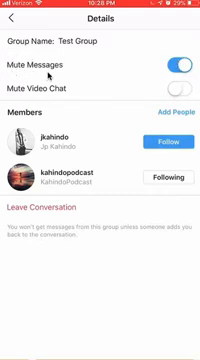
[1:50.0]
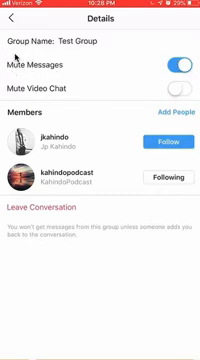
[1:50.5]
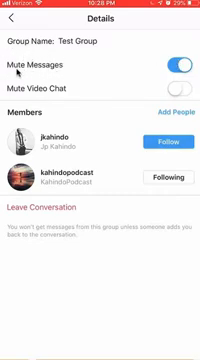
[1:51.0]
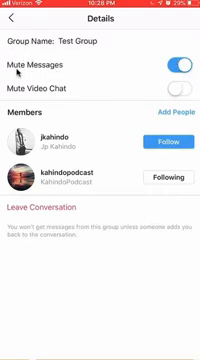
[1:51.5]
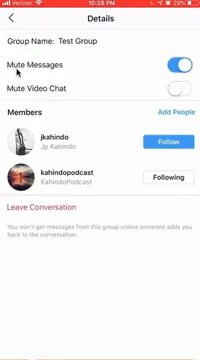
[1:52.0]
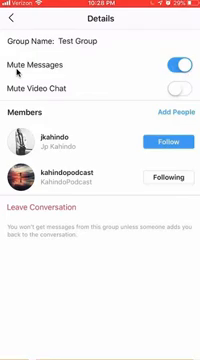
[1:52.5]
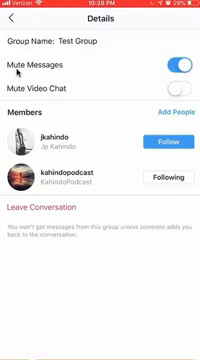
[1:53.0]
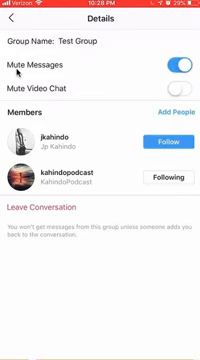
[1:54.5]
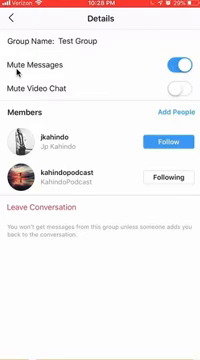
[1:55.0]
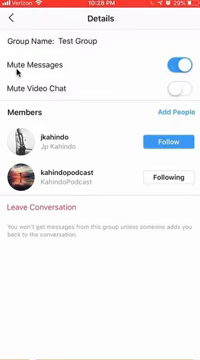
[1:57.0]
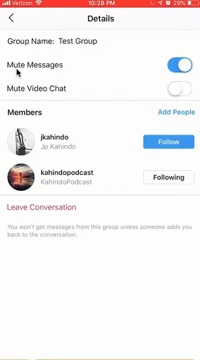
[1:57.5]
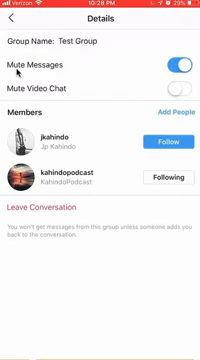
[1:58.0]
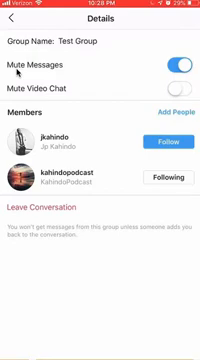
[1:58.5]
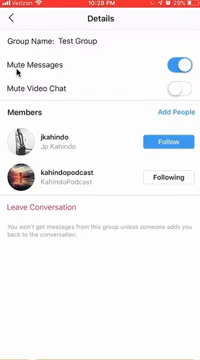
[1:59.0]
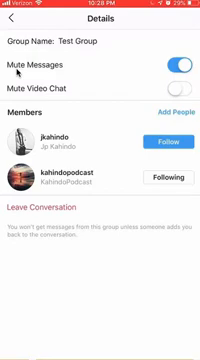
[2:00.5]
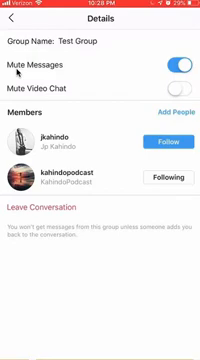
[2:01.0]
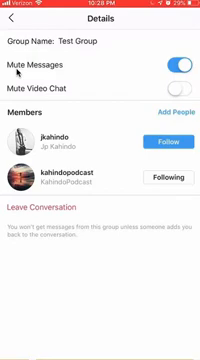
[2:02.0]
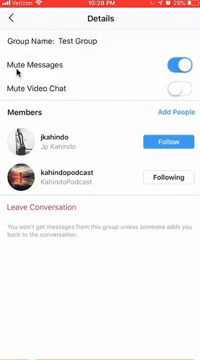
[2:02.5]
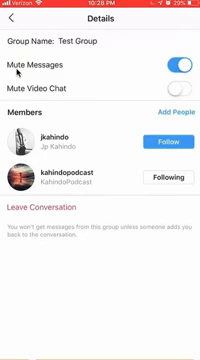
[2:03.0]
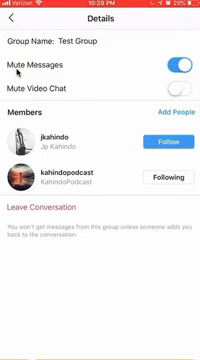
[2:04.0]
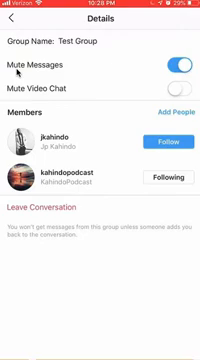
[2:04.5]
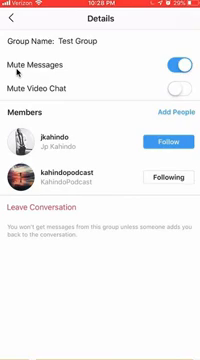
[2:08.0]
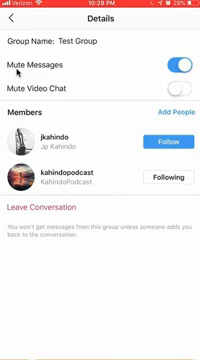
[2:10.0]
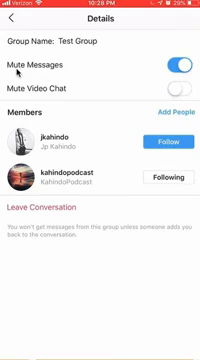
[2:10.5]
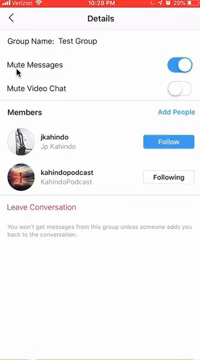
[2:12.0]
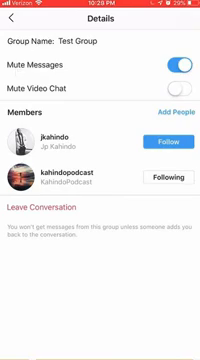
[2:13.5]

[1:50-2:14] A new conversation is chosen, and the screen shows nothing yet. Text on the screen says "new conversation" and "you won't get messages from this group unless someone adds you back to the conversation," which looks like the user has left the group and cannot send messages. The group shows two members and an option to add people.